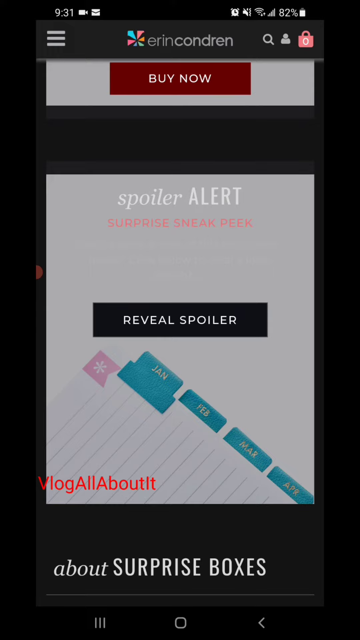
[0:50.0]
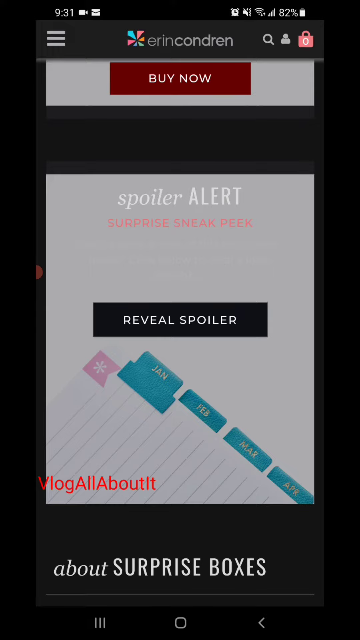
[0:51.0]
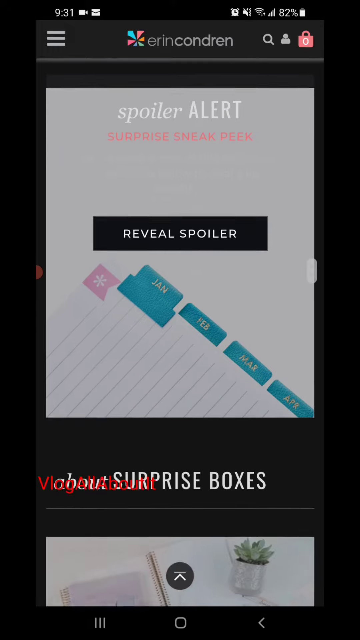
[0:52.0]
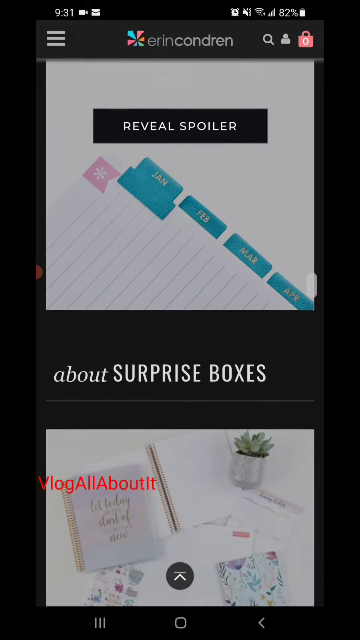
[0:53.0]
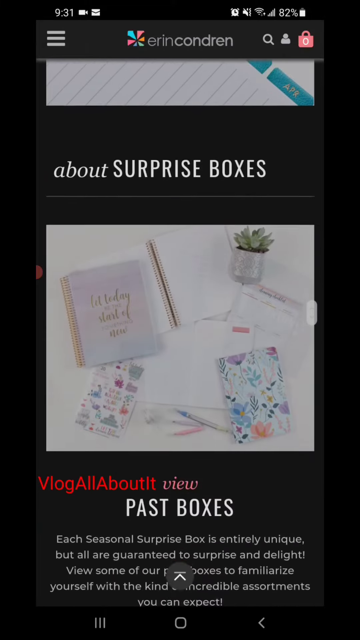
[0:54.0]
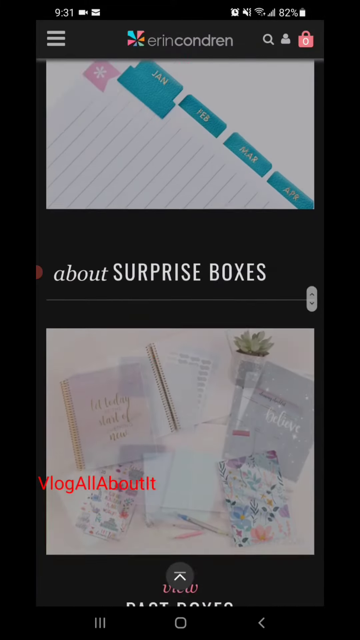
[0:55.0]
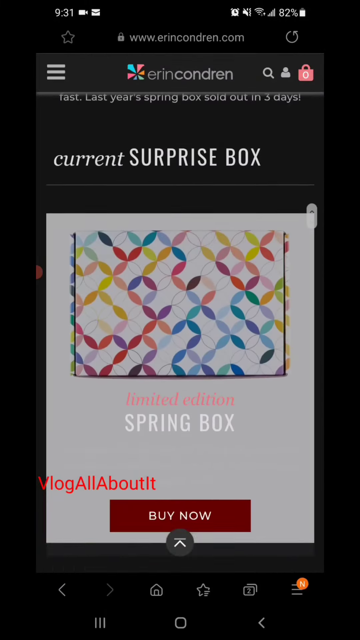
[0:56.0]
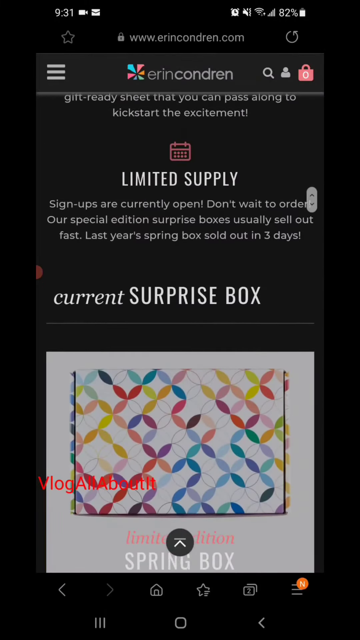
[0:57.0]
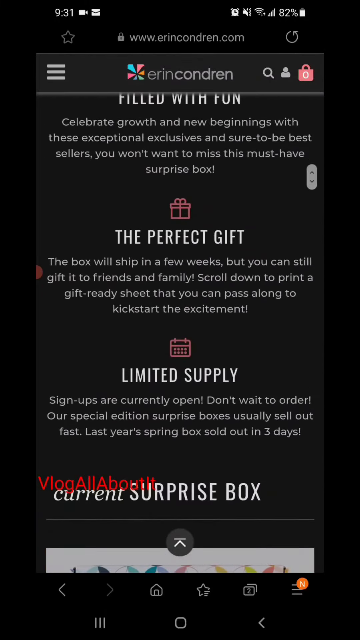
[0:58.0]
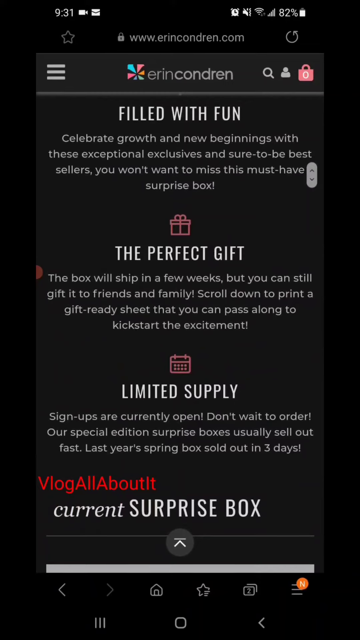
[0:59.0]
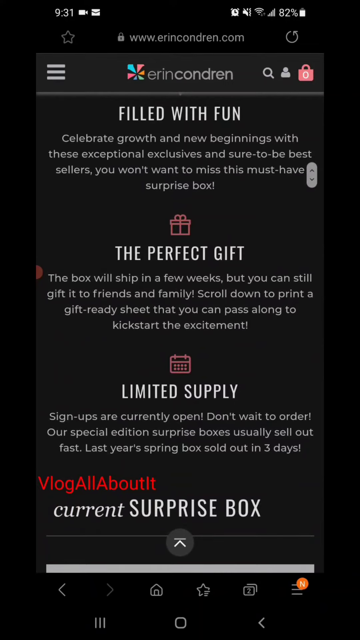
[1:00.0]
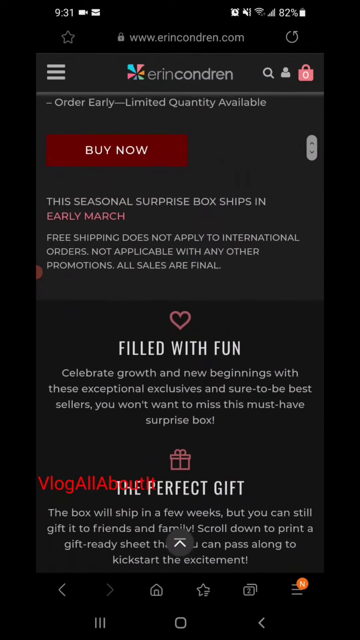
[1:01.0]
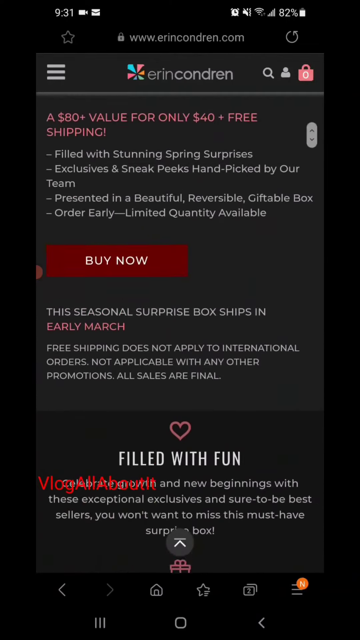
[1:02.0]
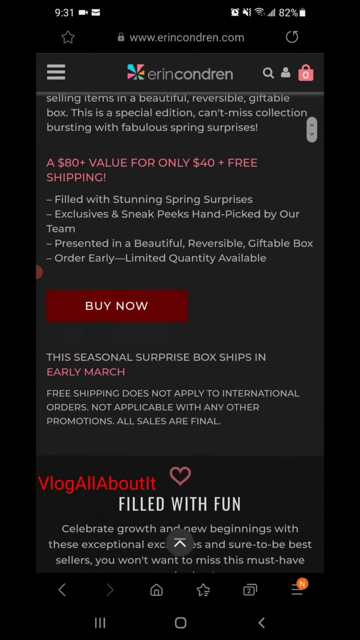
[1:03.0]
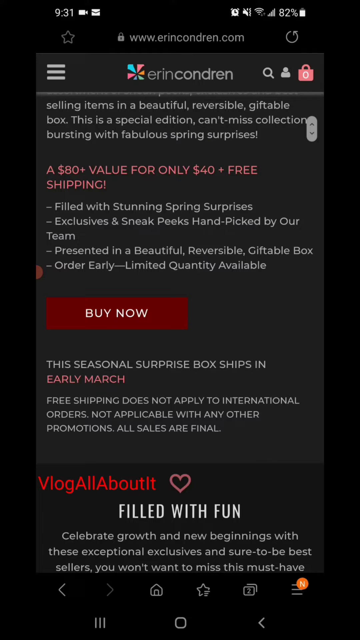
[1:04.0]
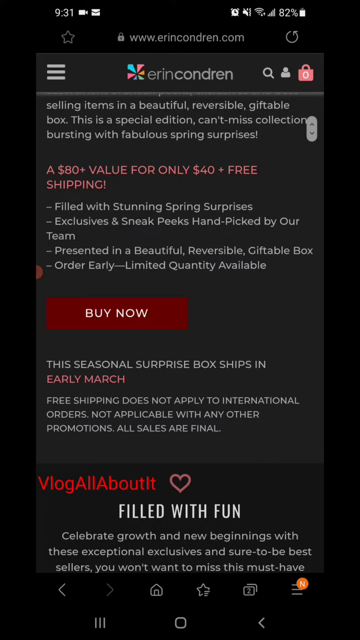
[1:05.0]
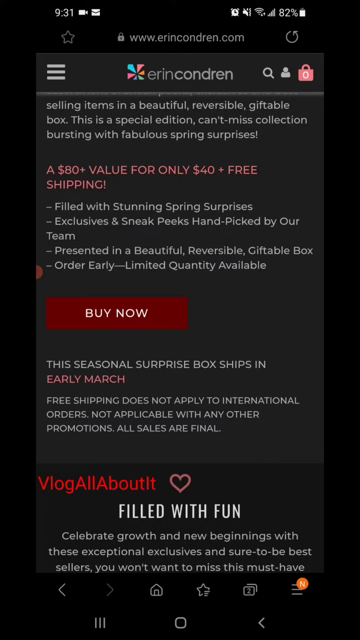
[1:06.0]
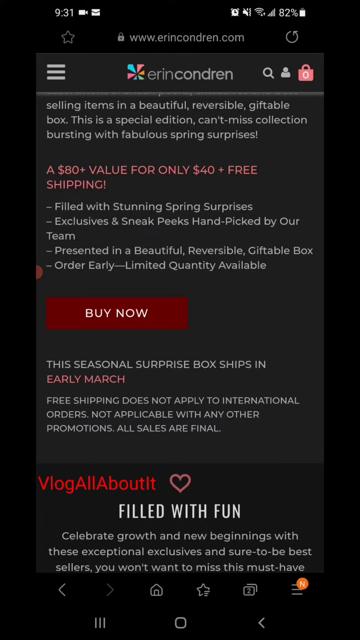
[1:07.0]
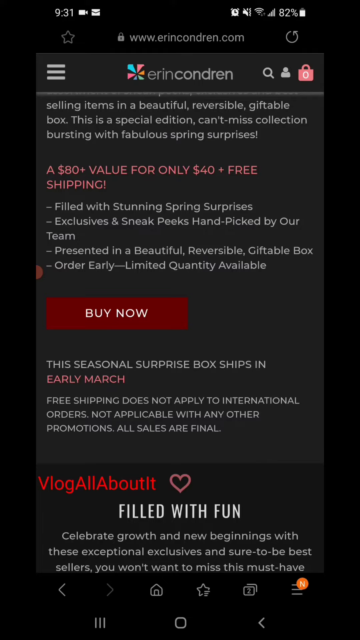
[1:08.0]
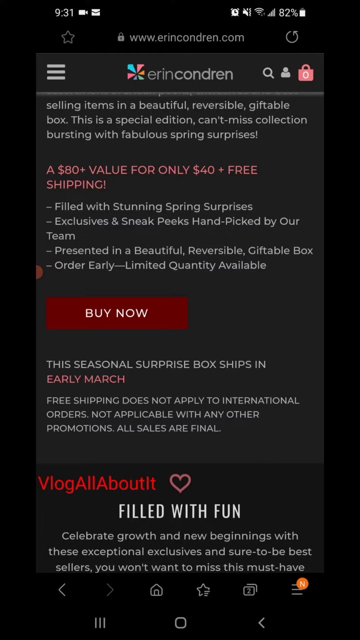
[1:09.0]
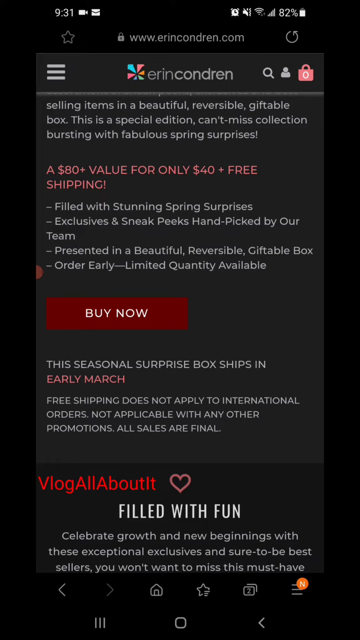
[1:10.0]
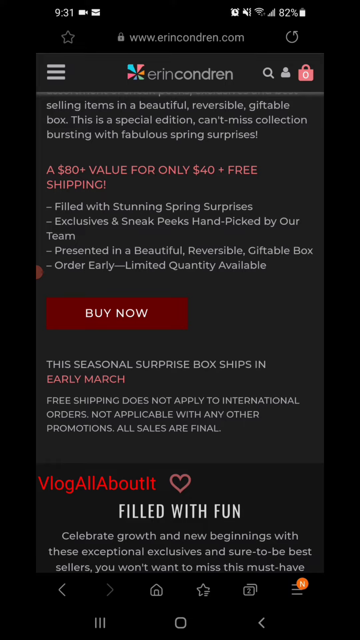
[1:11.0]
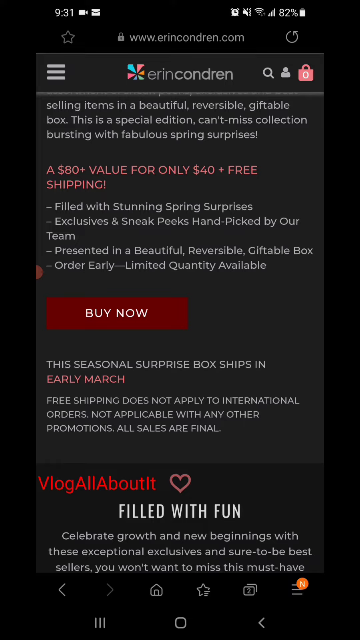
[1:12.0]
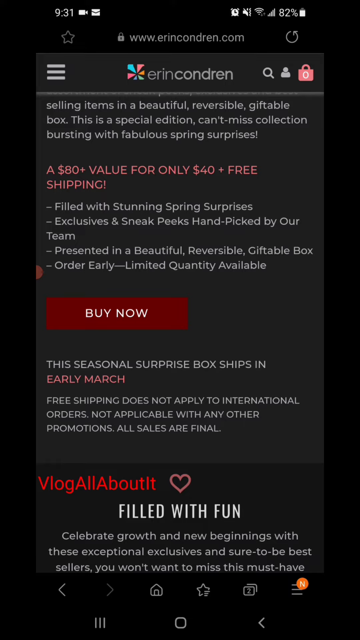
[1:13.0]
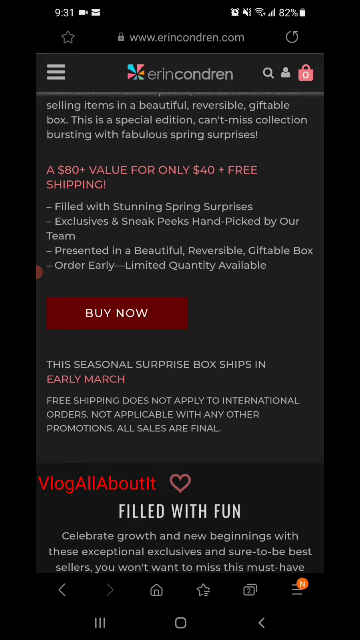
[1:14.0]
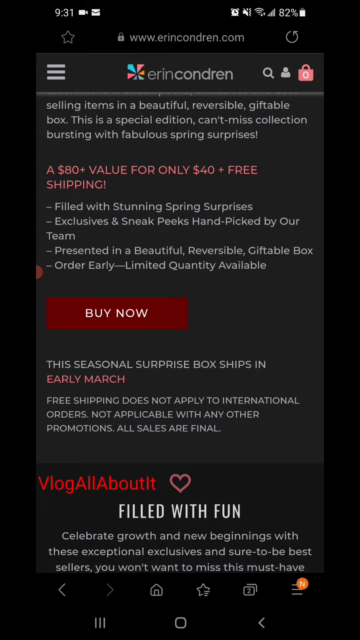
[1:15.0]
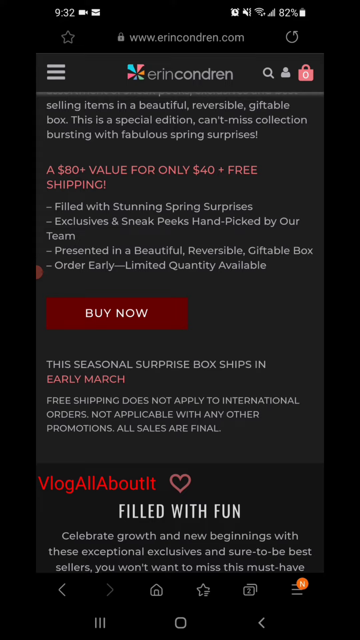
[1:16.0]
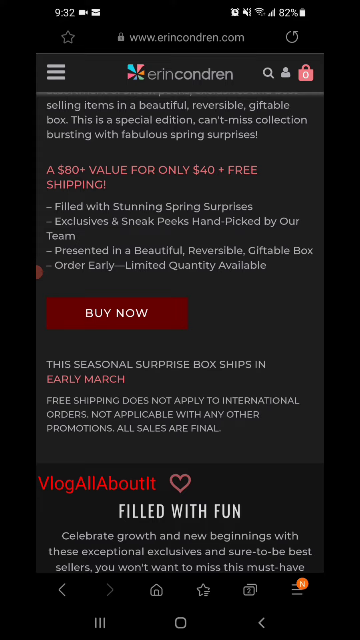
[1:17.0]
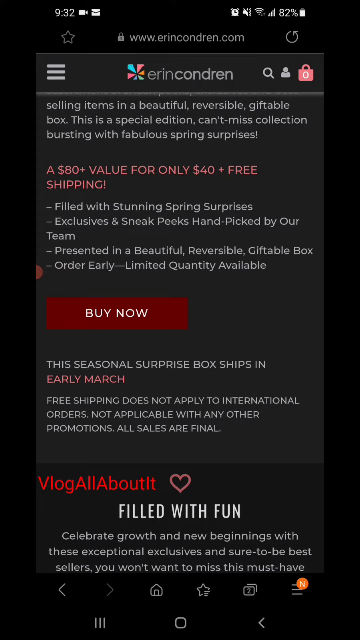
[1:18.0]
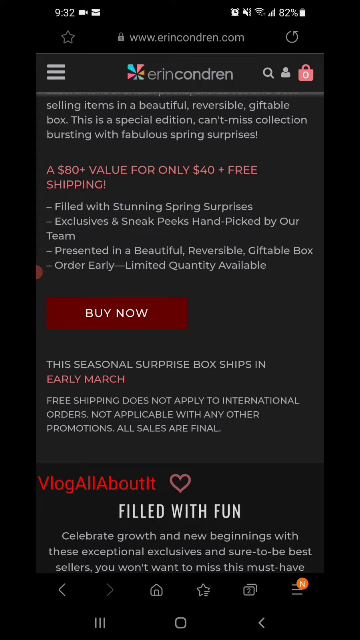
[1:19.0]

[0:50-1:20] The Erin Conrad site is still shown, with the spoiler alert reading "surprise sneak peek revealed spoiler." Clicking it shows small month-of-the-year tabs, and text says "about surprise boxes" and "past boxes," followed by "Each seasonal surprise box is unique, but all are guaranteed to surprise and delight. Some of our best past boxes to familiarize yourself with the kind of incredible assortment you can create." The page then scrolls up, going back through the earlier content in reverse, and it ends exactly where it left off before.